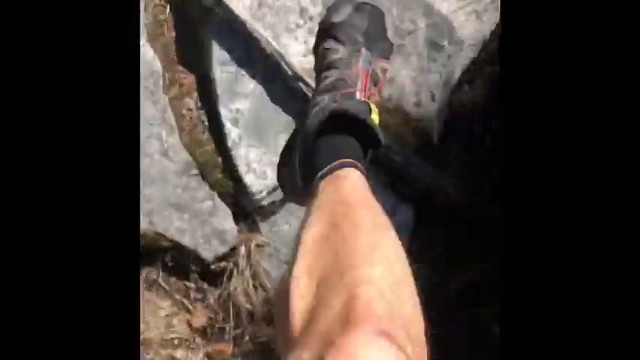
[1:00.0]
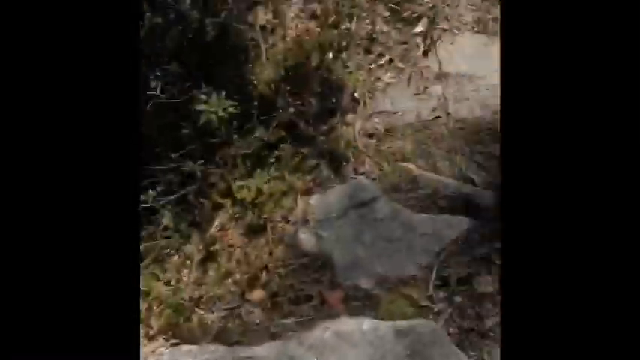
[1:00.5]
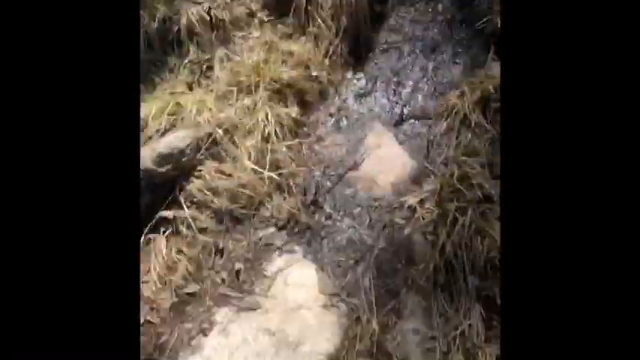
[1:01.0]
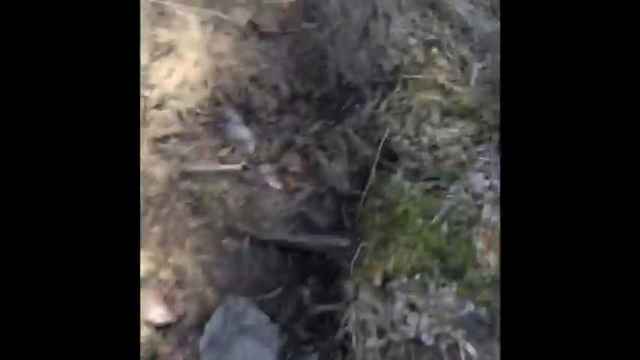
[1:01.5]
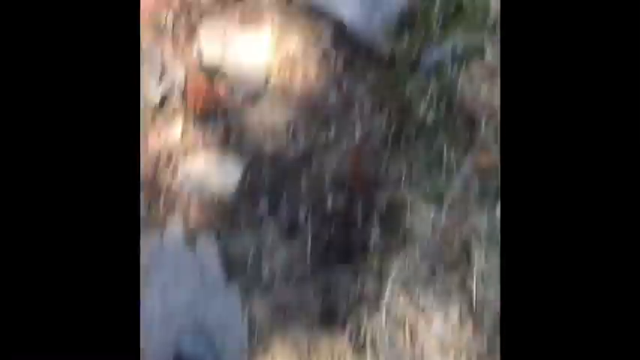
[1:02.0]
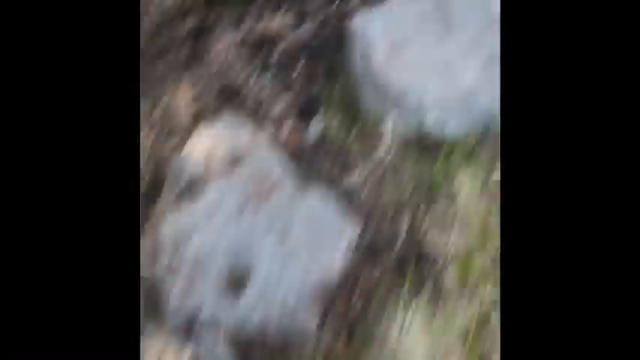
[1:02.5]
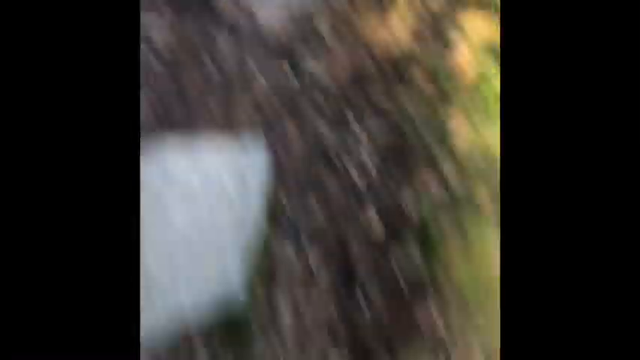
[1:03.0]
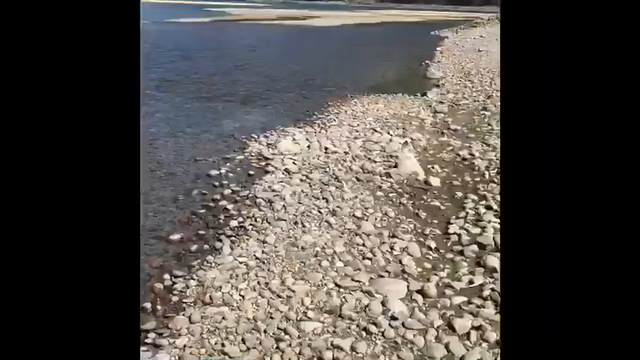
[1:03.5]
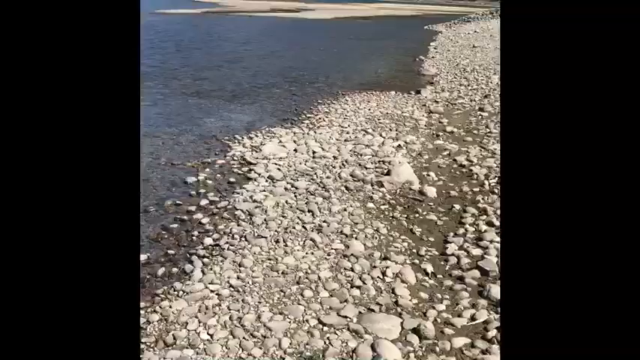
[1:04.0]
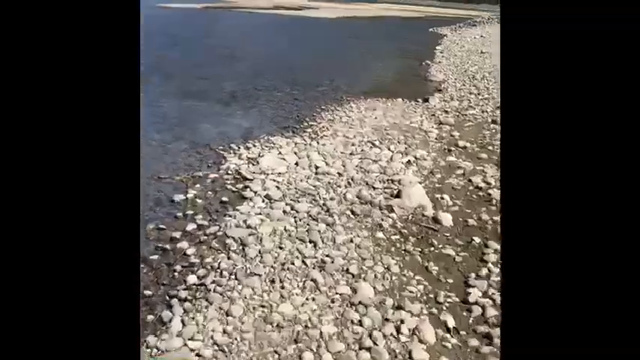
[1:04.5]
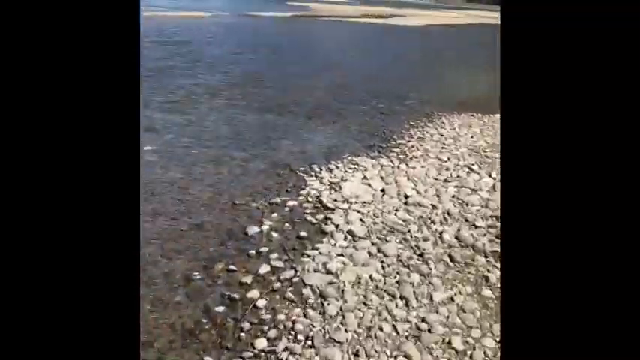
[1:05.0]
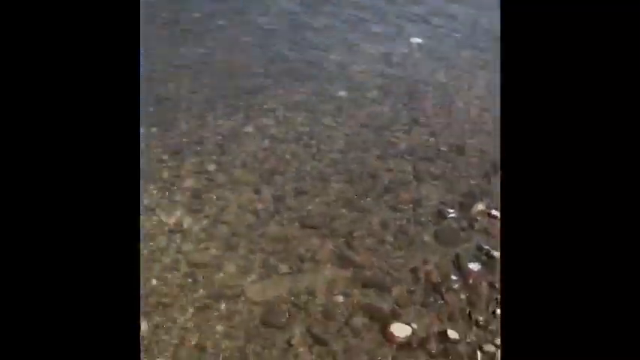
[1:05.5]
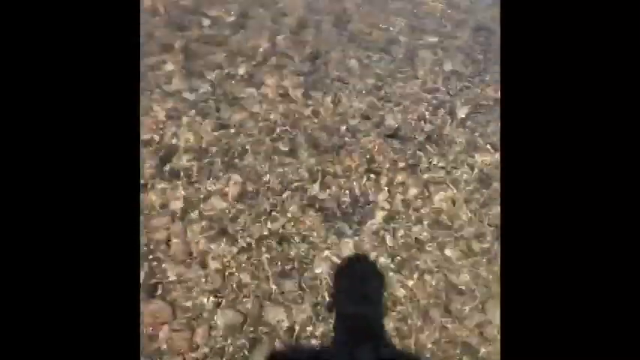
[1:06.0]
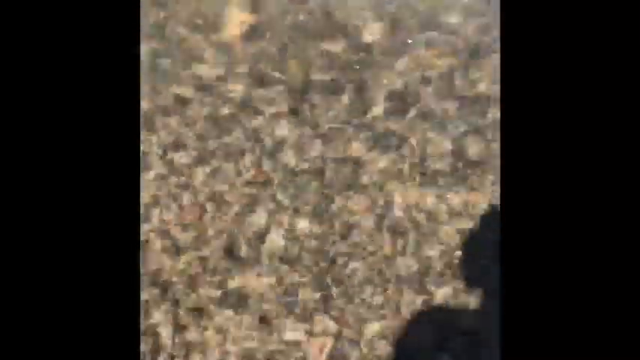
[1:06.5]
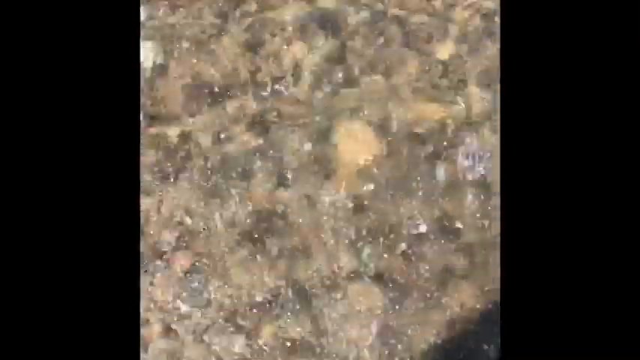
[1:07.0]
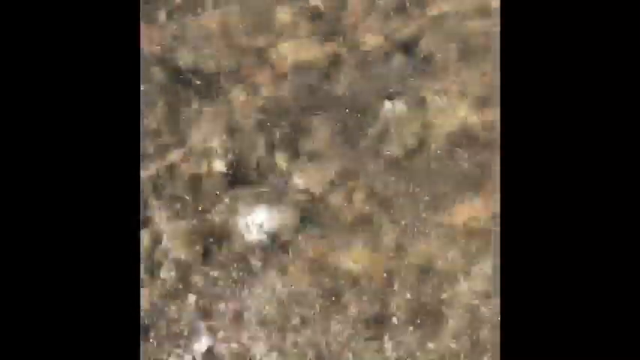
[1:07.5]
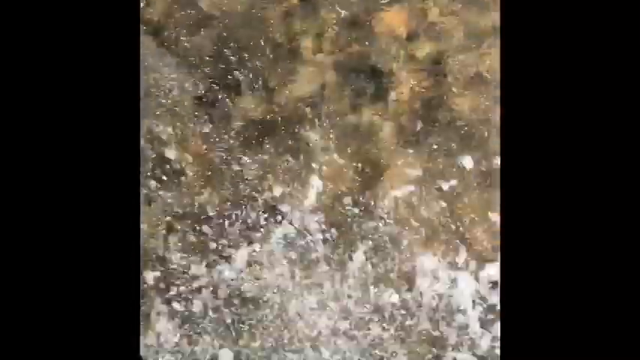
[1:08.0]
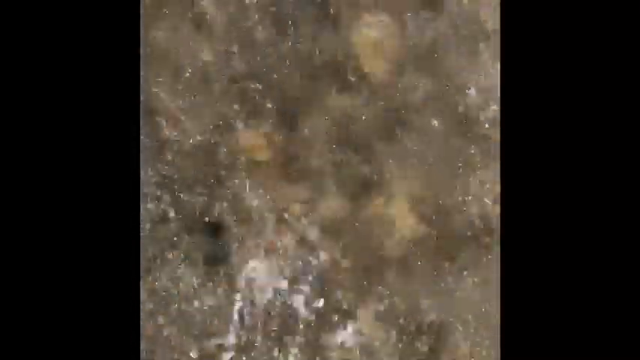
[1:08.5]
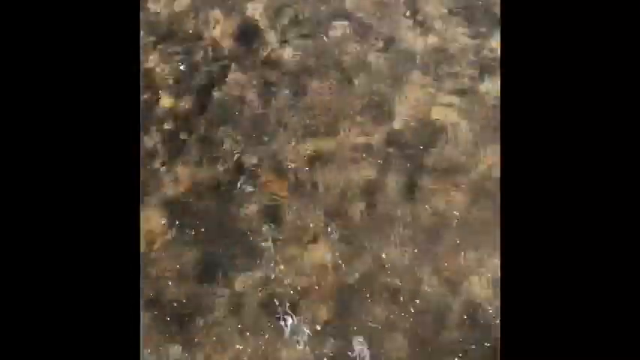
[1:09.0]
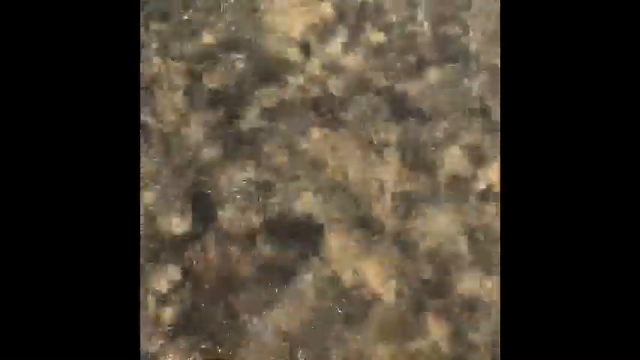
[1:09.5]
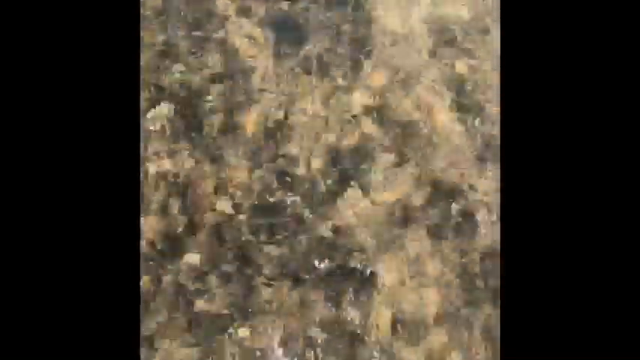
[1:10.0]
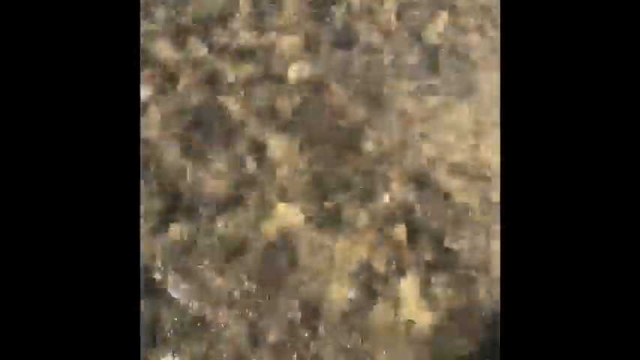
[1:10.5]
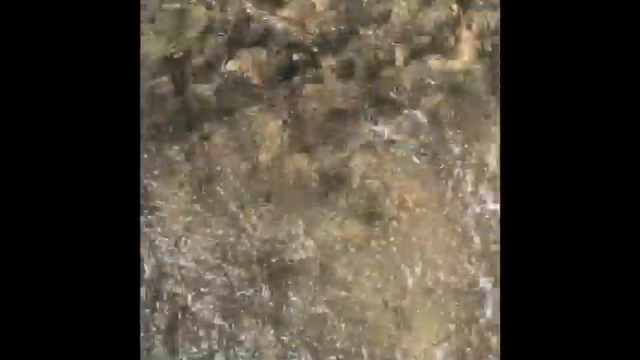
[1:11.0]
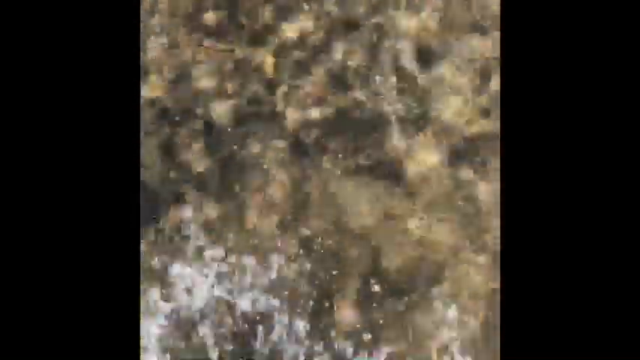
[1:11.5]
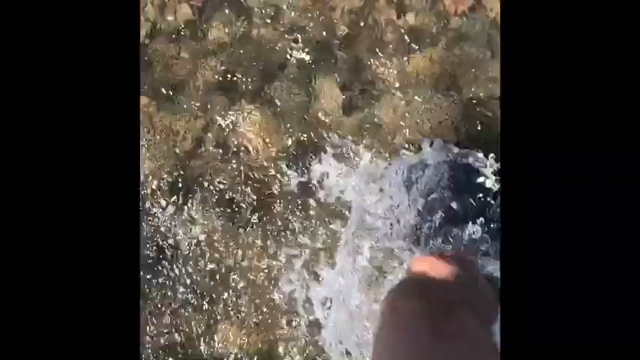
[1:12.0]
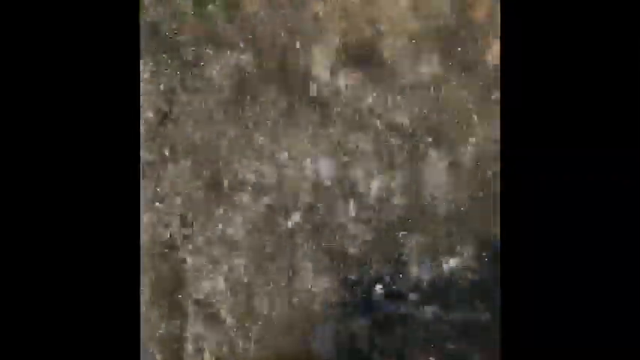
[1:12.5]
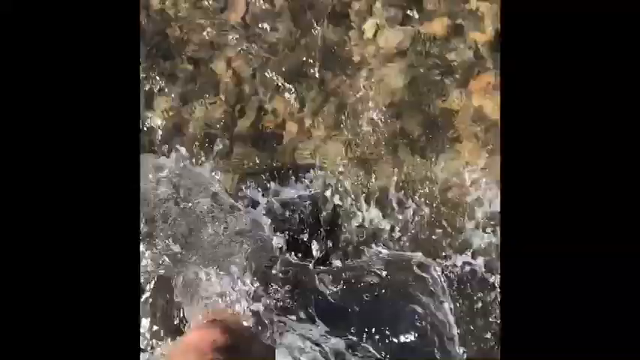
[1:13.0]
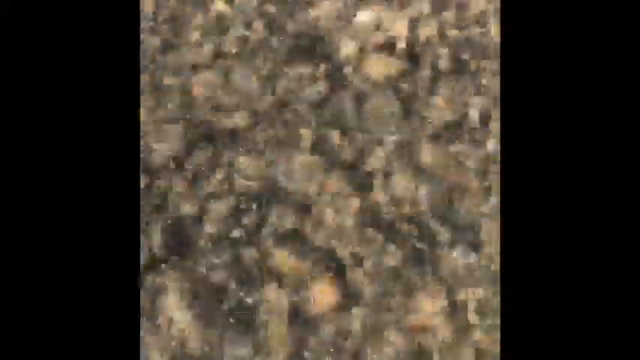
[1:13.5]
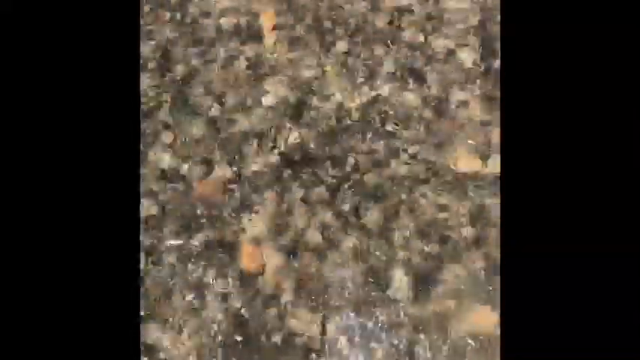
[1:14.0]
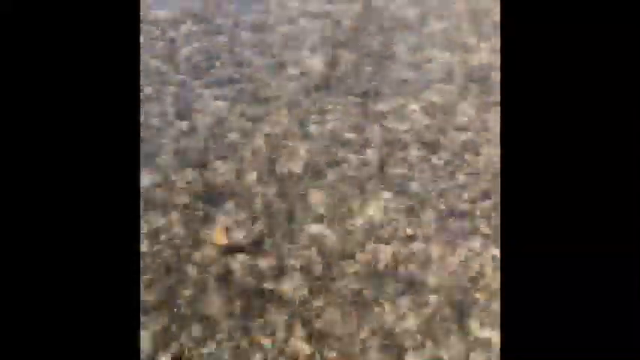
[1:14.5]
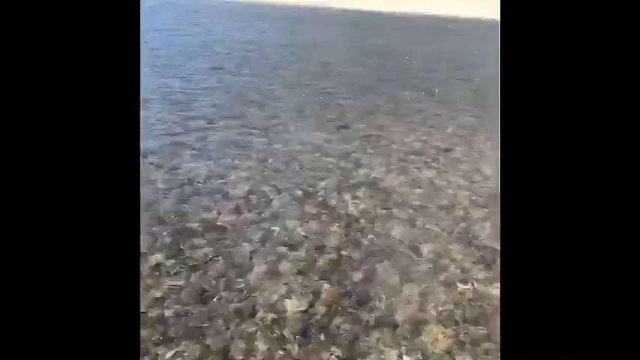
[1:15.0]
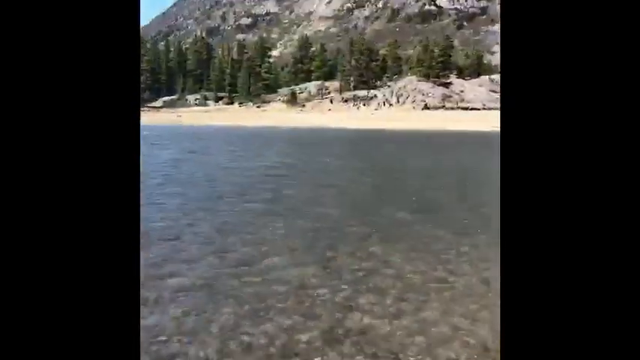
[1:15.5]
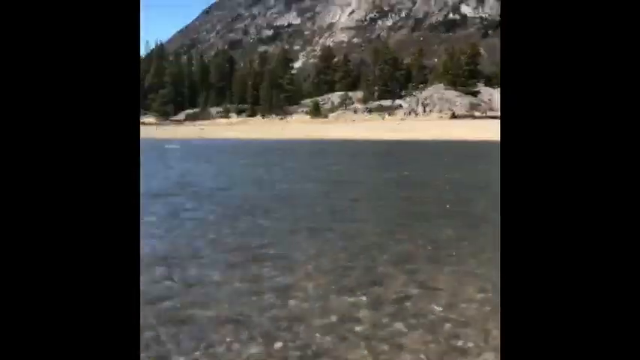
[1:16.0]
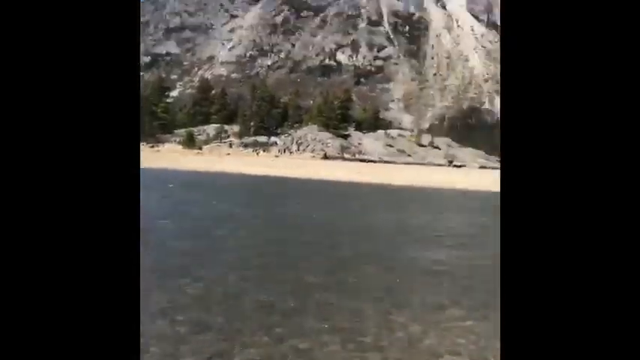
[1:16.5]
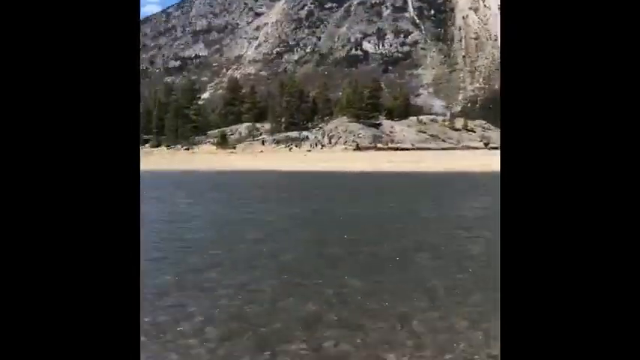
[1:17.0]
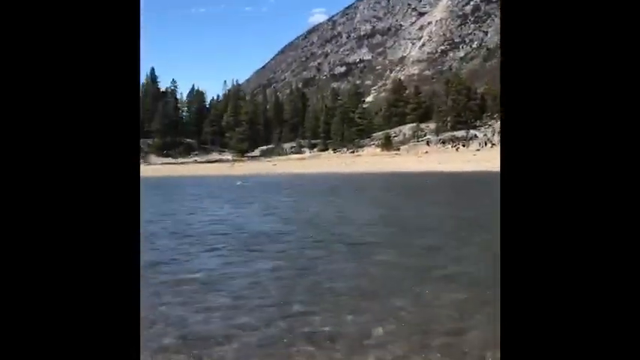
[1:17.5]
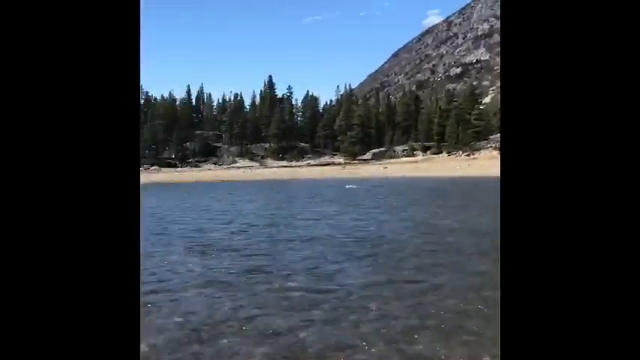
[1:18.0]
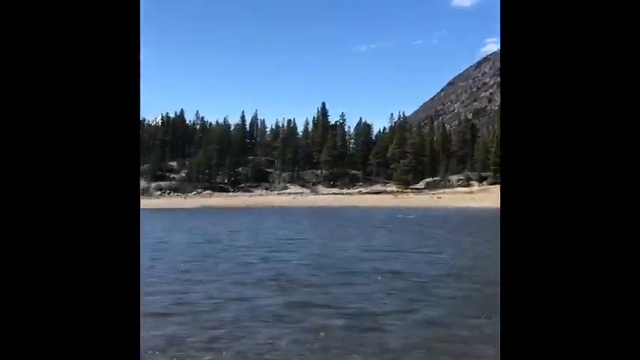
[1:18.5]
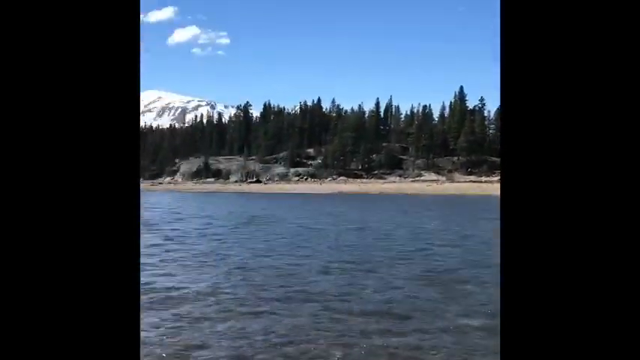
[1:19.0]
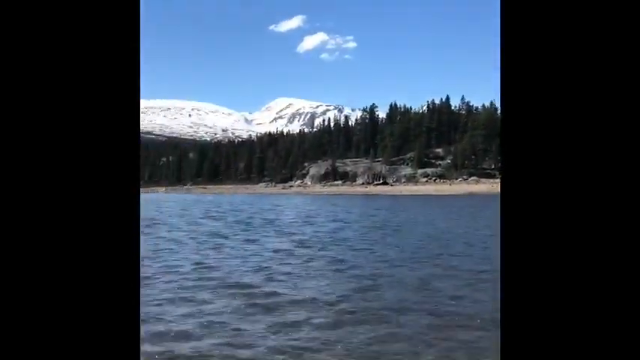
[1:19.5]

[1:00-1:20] The camera view is from someone running along a hiking trail. At first the camera faces the ground, showing brown dirt sections and stones used to mark the path. The view cuts to a look out over the shore of a lake: a rocky shore with many white rocks is along the right-hand side and the lake is to the left. The lake has a rocky bottom, and a slight breeze causes ripples on the water. The view pans left until it faces the lake, then down toward the runner's feet as they enter the water. For several steps, water splashes up from the bottom of the screen as the runner's feet move, though the feet are not visible. The view pans up to the far shore, which has a small sandy strip and then a mountainous wall. Panning left, this hill comes down to a pine forest, and further left, far in the distance, are mountains with snow-capped peaks.